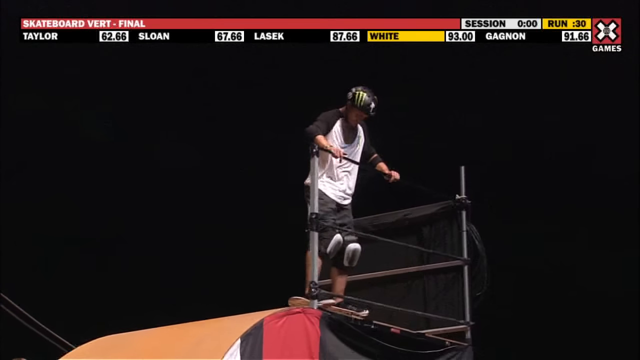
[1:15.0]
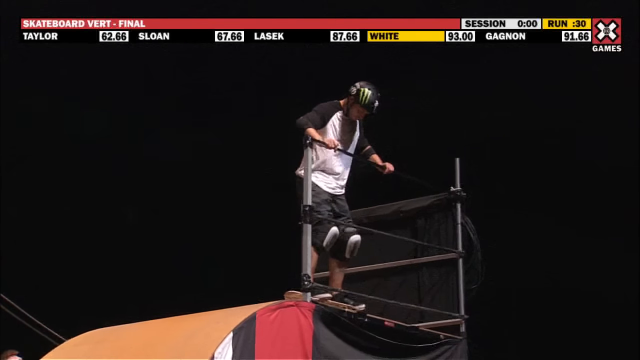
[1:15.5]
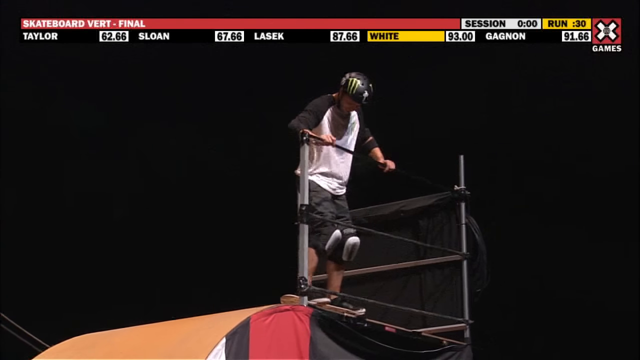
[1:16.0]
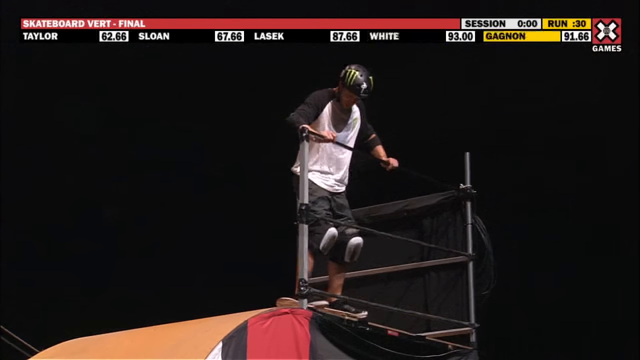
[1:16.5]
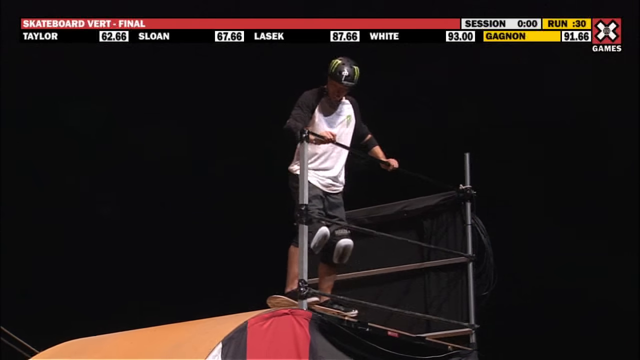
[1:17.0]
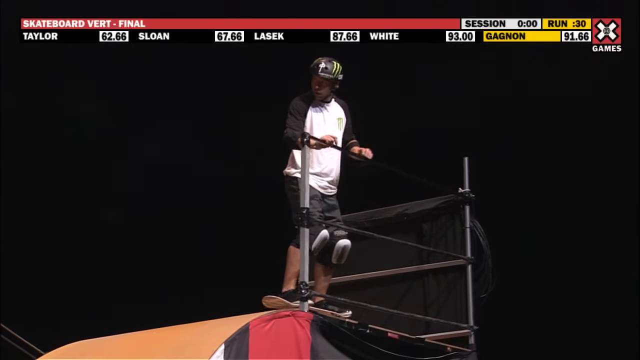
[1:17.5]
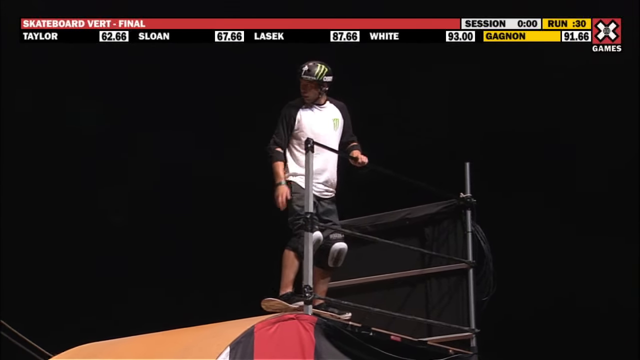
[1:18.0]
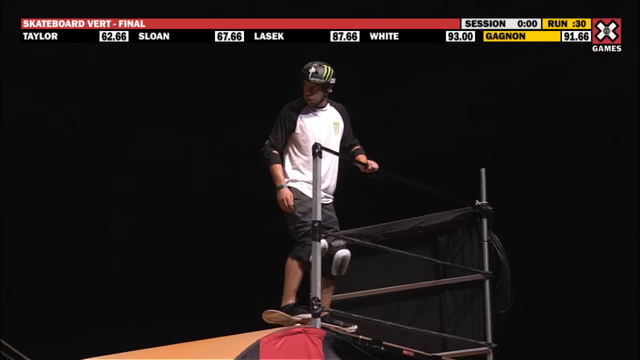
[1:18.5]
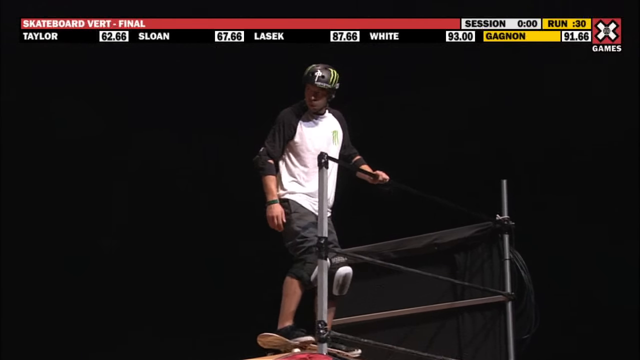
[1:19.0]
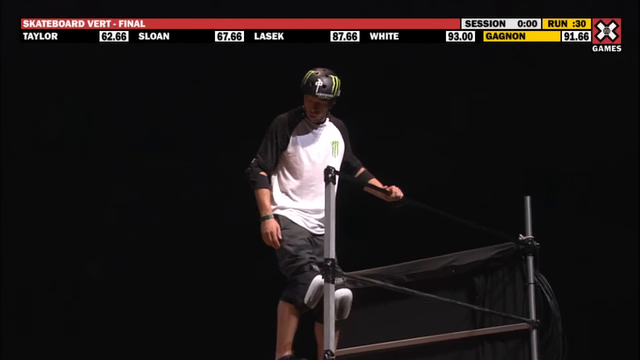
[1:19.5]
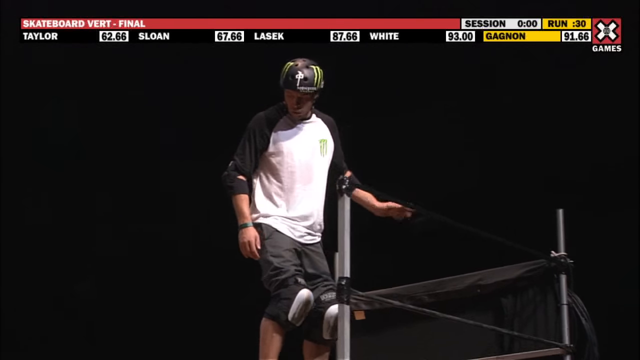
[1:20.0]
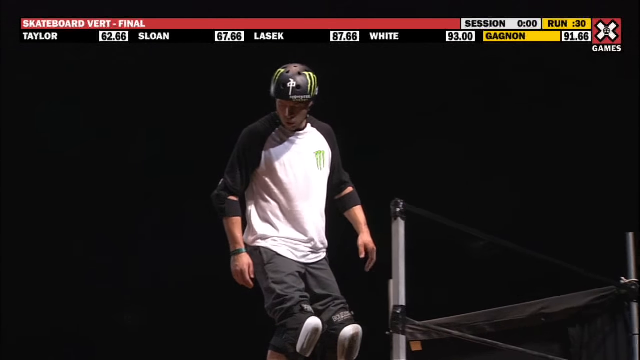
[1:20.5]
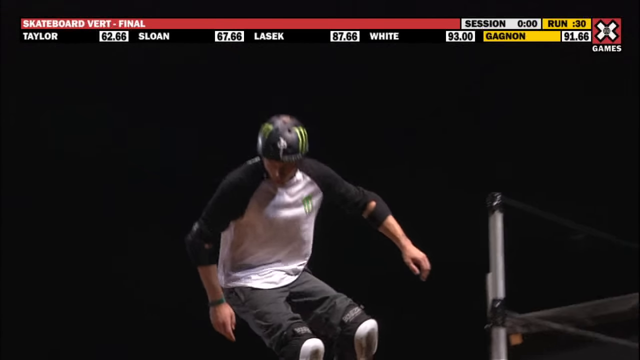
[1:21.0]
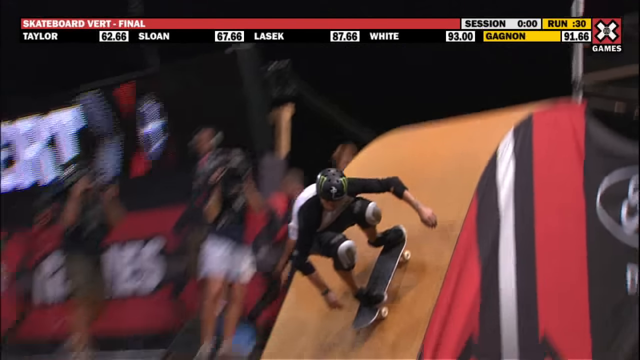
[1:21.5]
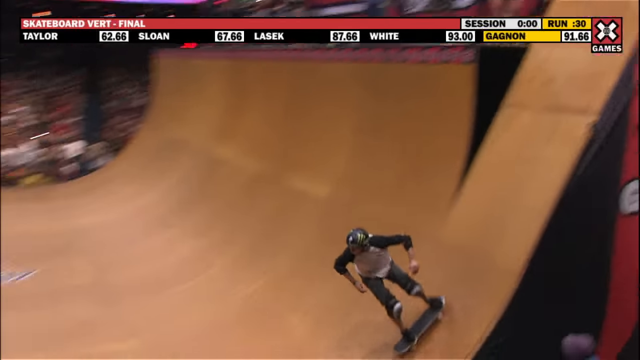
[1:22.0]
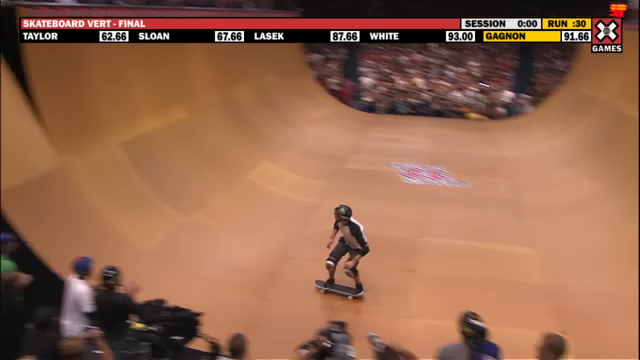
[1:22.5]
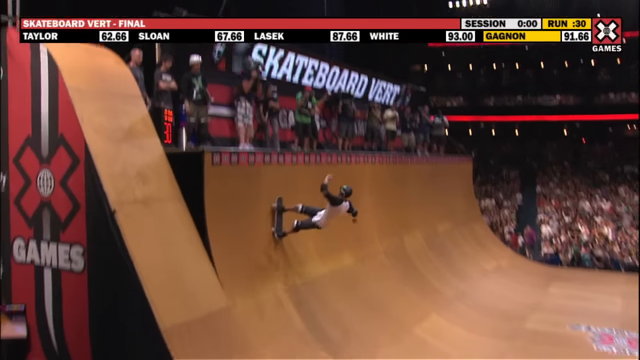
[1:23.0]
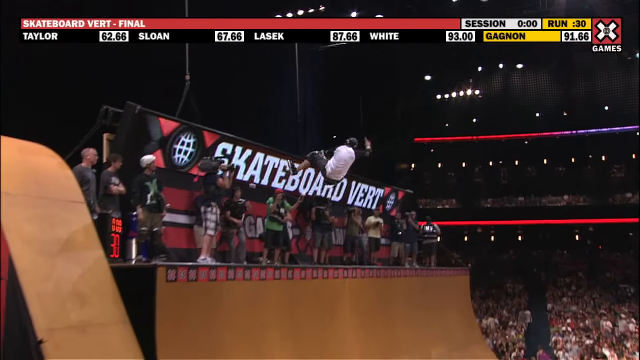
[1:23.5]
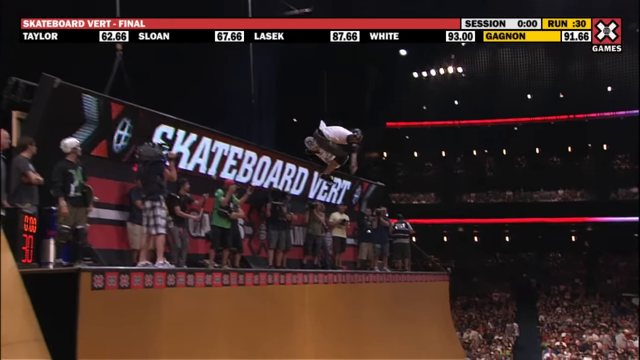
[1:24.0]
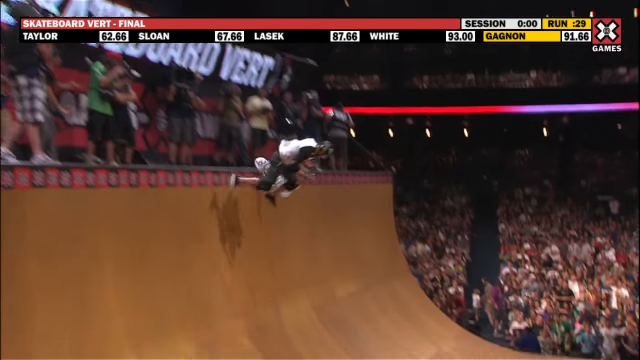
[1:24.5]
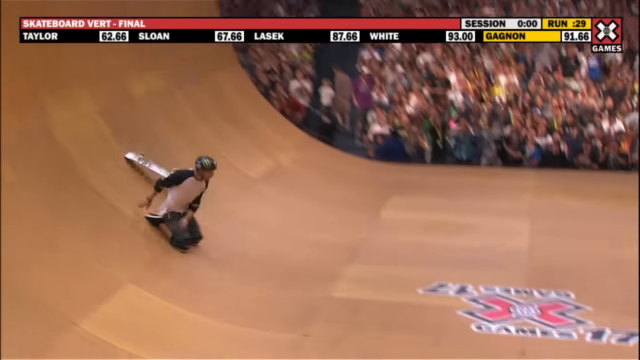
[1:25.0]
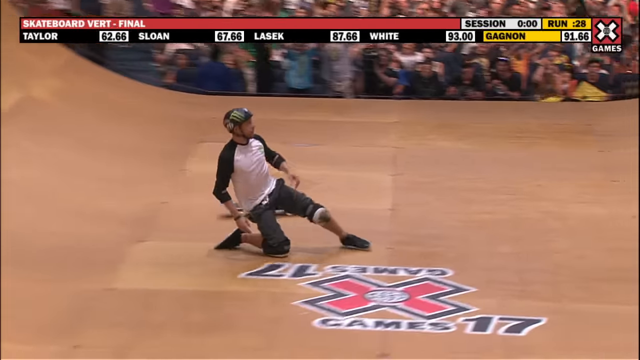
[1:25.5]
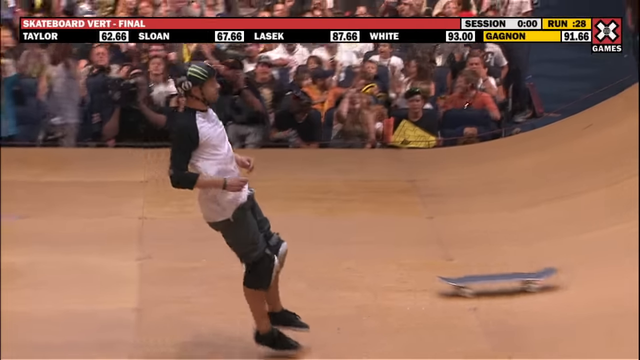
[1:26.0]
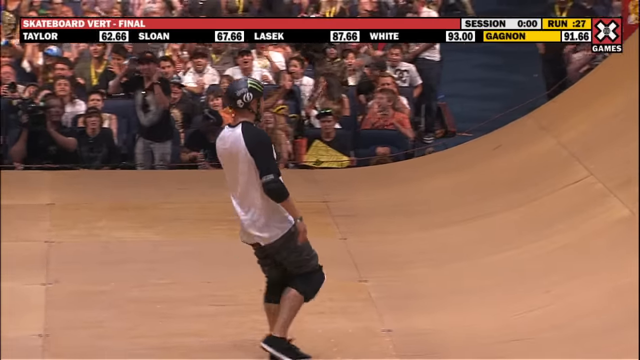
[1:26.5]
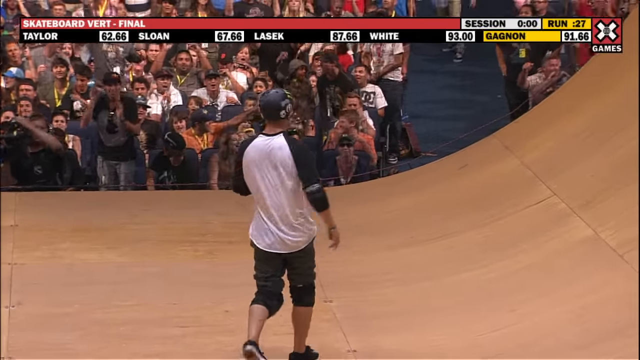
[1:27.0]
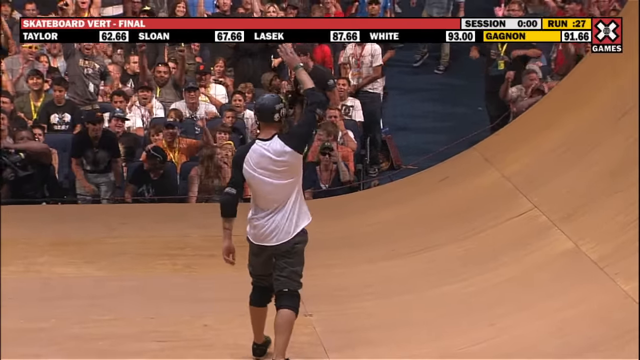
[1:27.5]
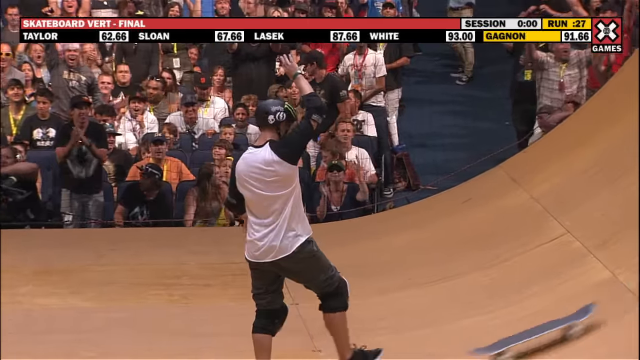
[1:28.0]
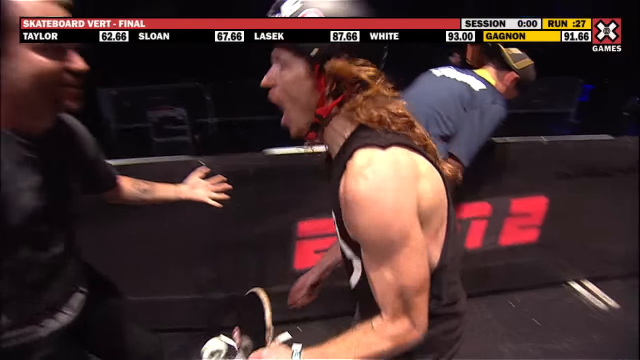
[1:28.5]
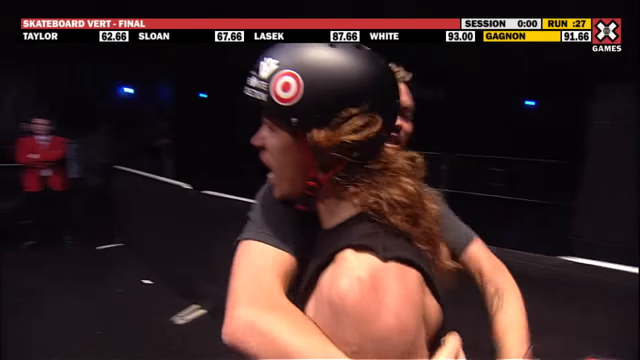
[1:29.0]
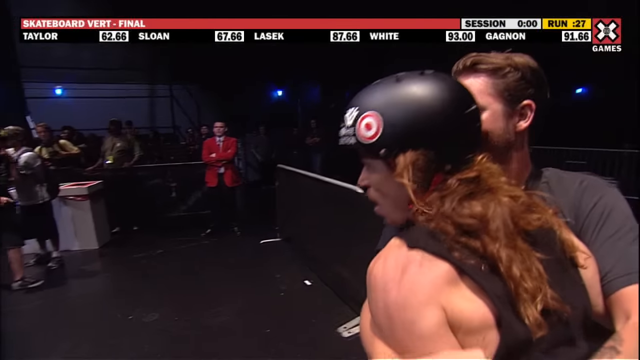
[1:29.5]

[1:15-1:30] The skateboarder in the baseball tee who has been waiting at the top of the ramp goes down the ramp on his skateboard. He does one trick but never gets the skateboard underneath his feet and does not land on it; he falls off and slides down the ramp on his knee pads. He wears a Monster Energy drink shirt and a helmet, and appears to know he is not going to make it. As soon as he slides on his knees, he unclips his helmet. The skateboarder in the black tank top yells as he bro hugs someone, probably having just won.